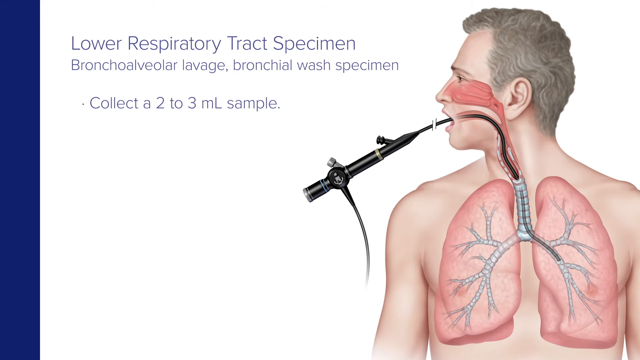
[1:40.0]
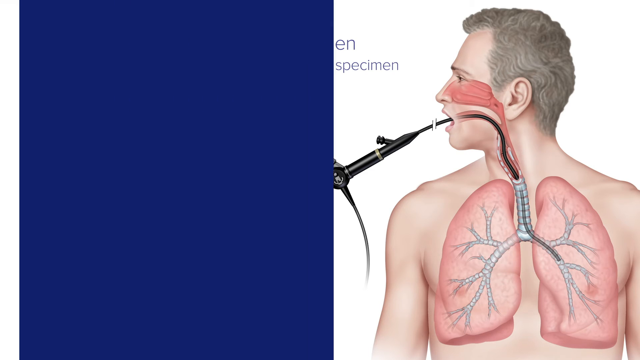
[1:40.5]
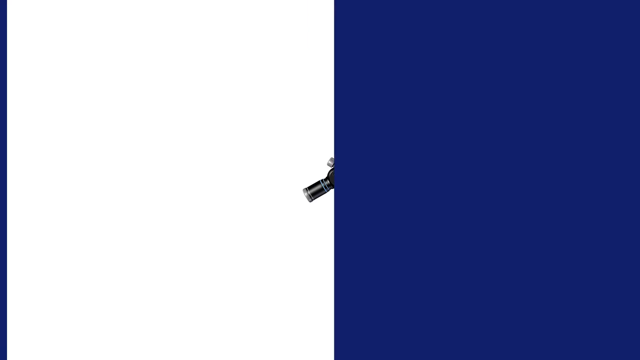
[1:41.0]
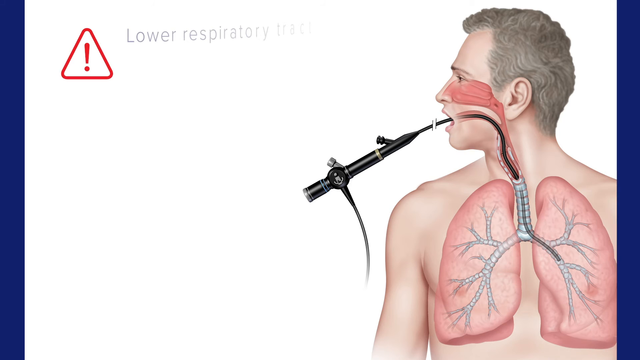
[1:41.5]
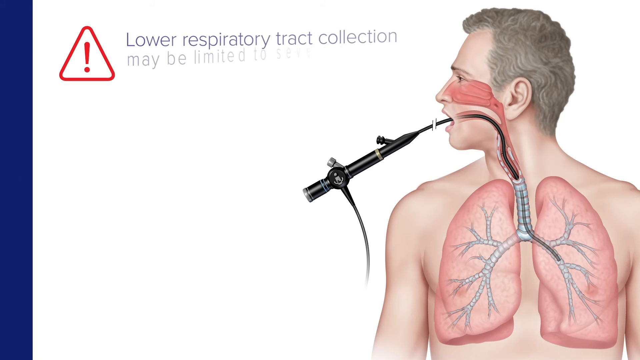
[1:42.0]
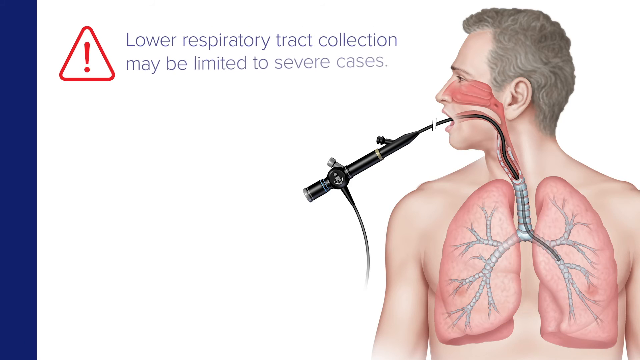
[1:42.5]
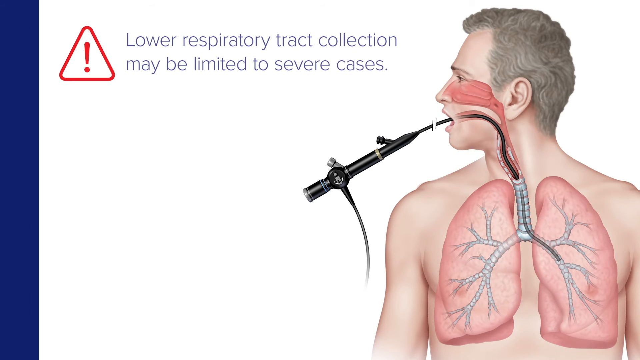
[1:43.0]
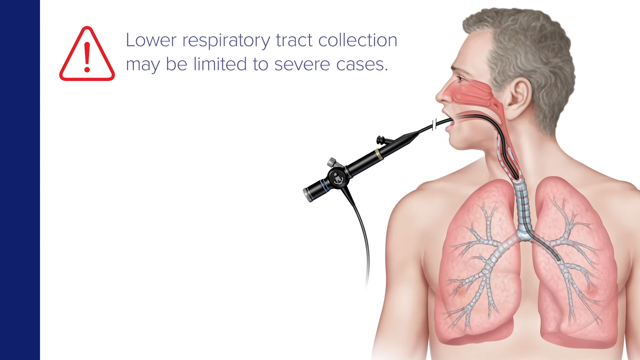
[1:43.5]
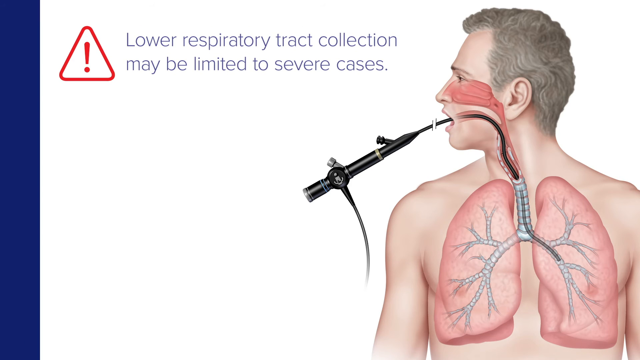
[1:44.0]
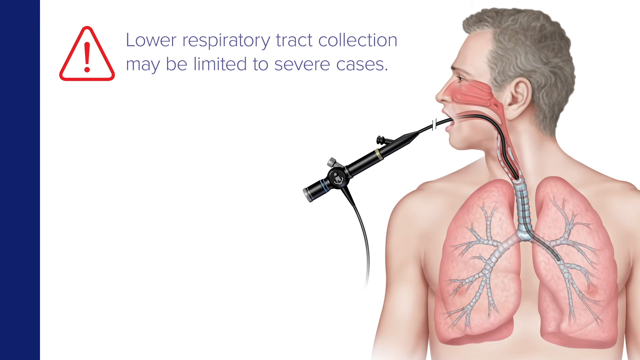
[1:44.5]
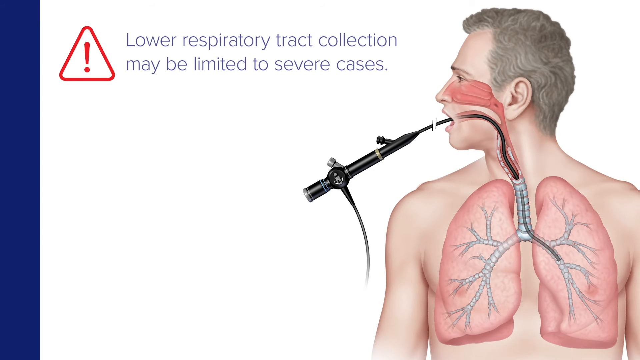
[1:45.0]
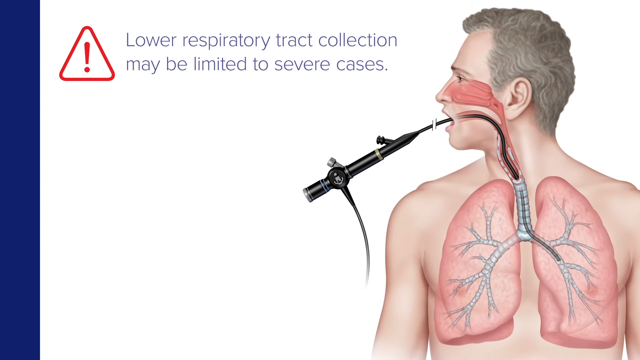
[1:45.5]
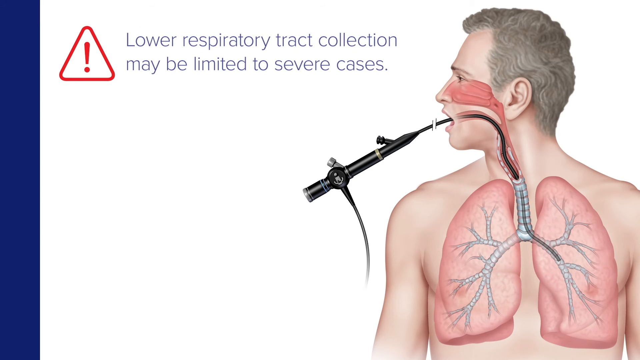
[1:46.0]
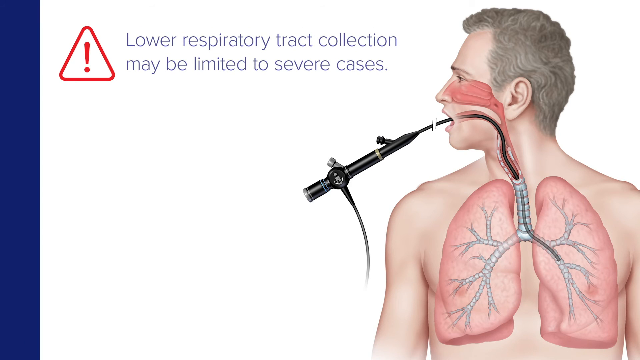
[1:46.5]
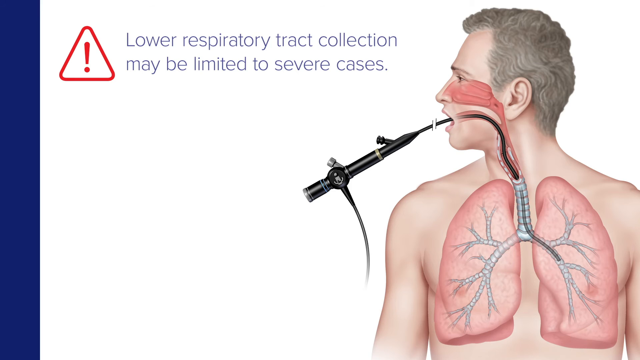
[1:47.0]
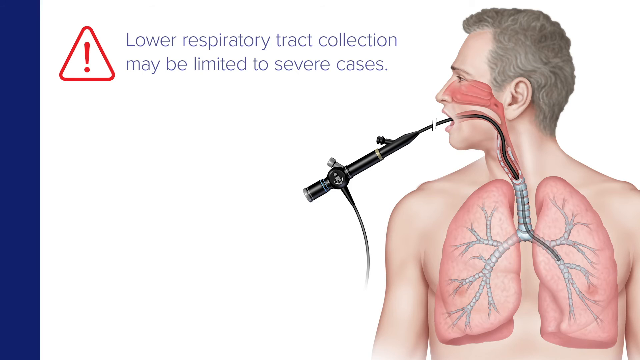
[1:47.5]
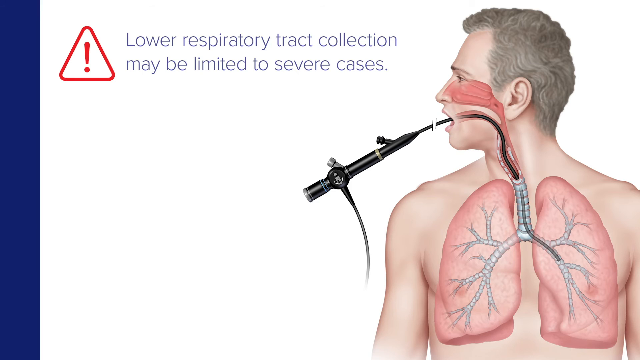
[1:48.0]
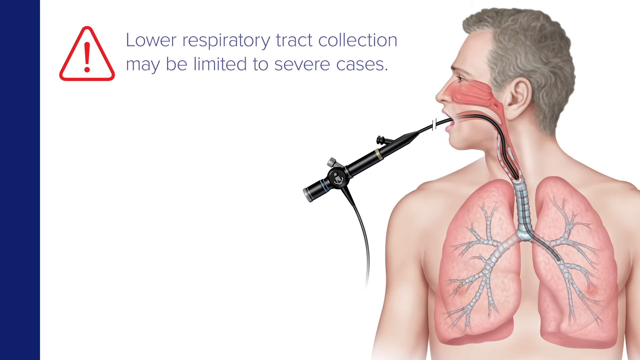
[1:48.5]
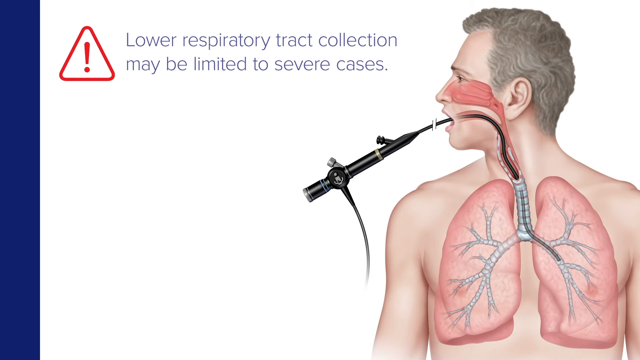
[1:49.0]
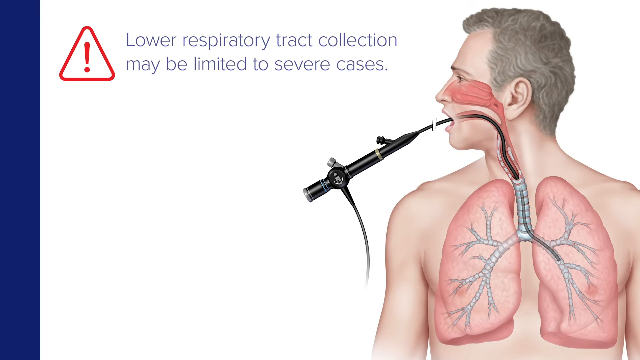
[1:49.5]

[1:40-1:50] The illustrated man faces forward, seen from mid-stomach up, with his head turned to the side and the odd device still down his throat going into his lungs. A red warning symbol appears on the left, a red exclamation mark within a red rounded-triangle outline, and navy words appear that say "lower respiratory tract collection may be limited to severe cases." The words seem to disappear quickly.